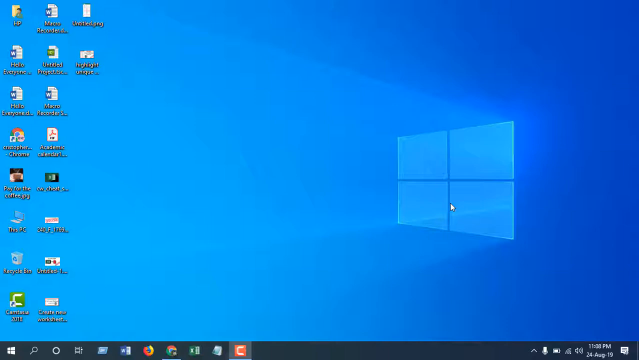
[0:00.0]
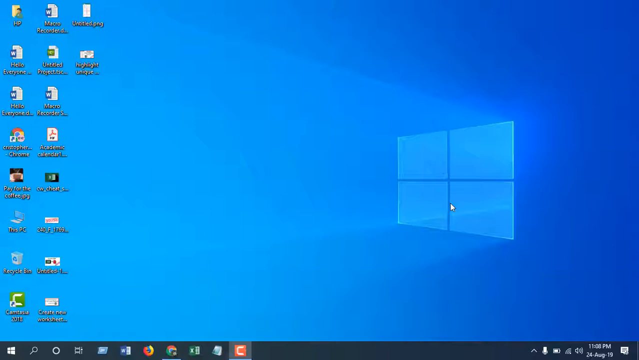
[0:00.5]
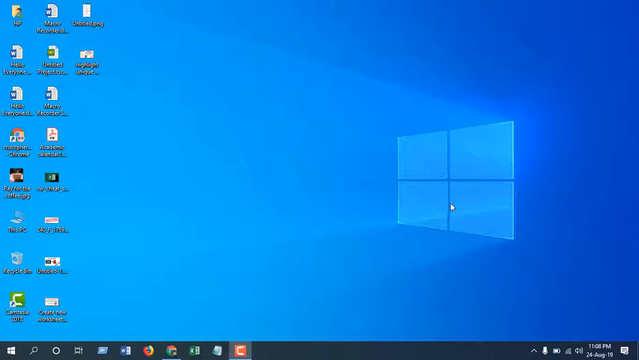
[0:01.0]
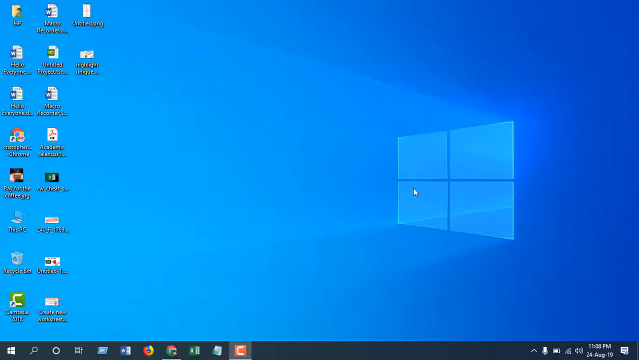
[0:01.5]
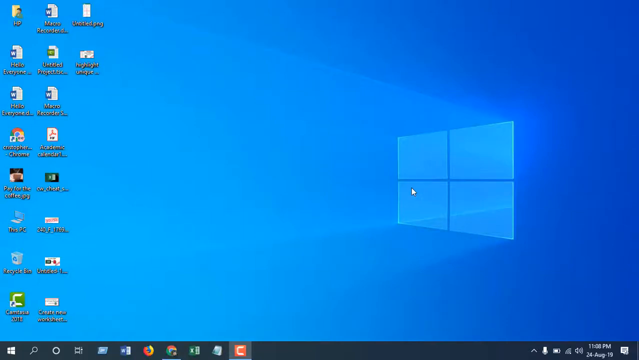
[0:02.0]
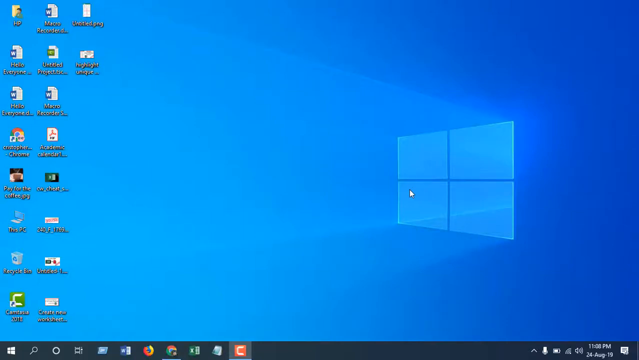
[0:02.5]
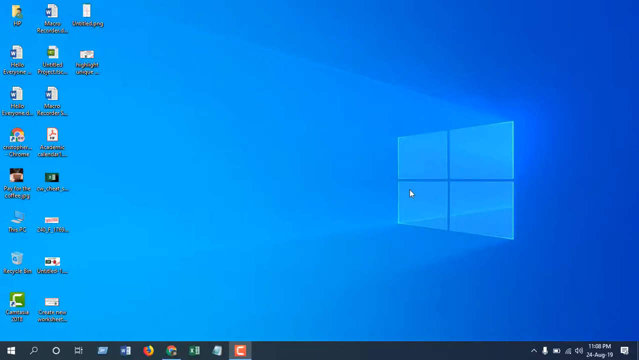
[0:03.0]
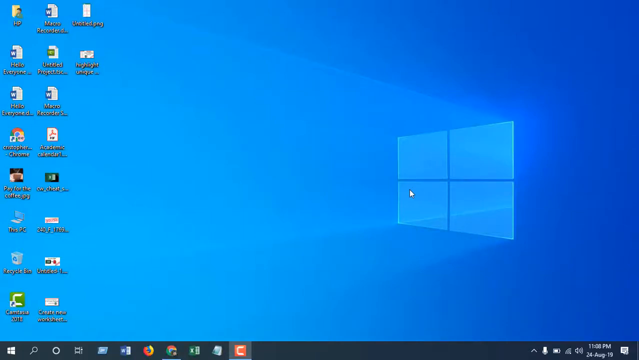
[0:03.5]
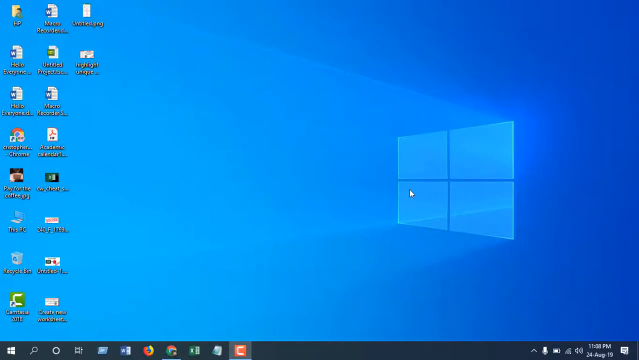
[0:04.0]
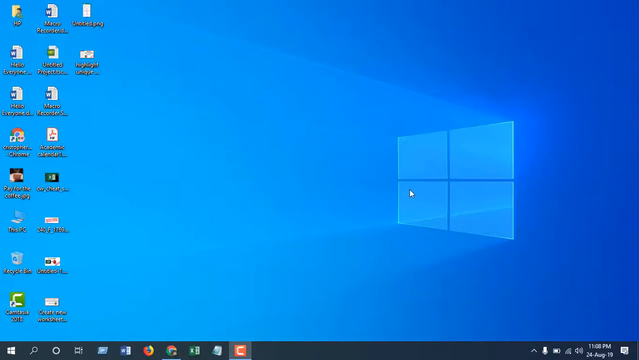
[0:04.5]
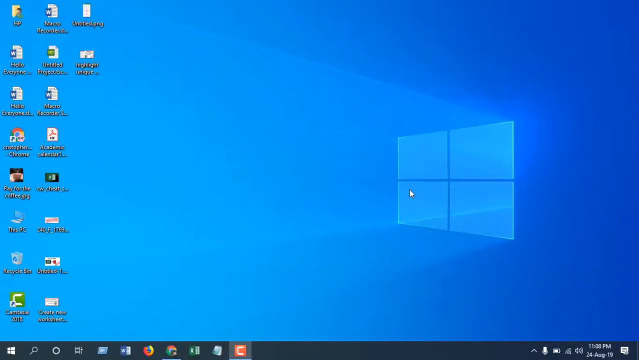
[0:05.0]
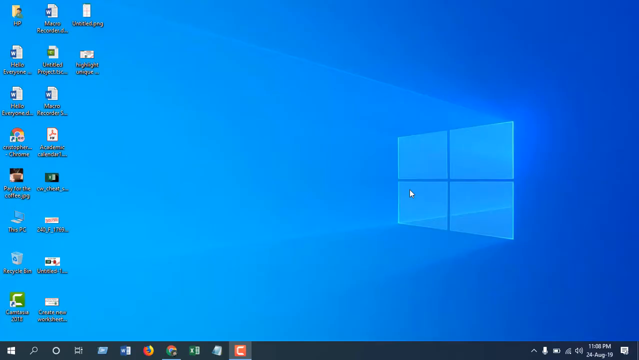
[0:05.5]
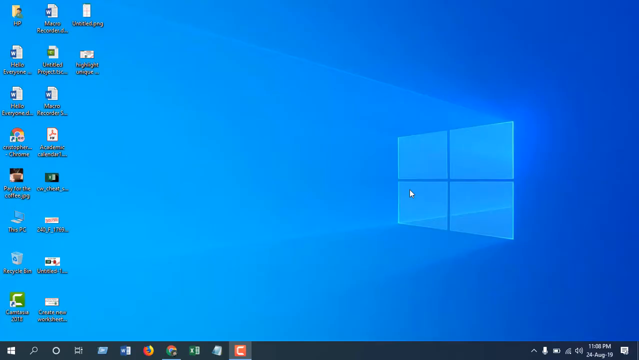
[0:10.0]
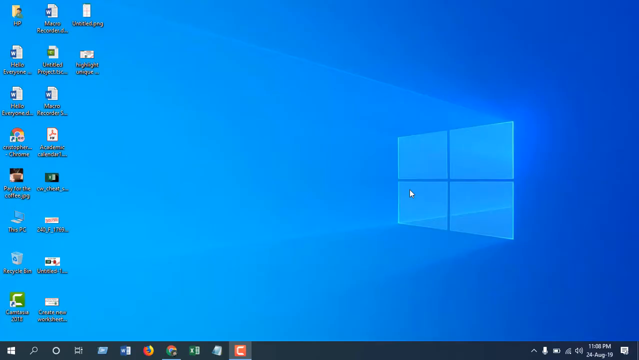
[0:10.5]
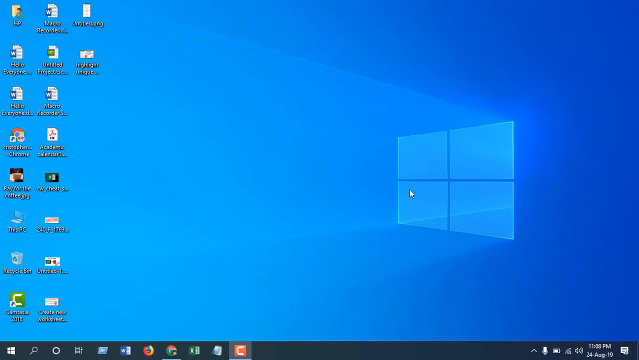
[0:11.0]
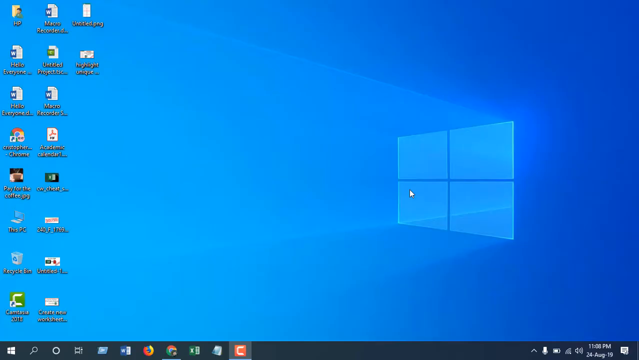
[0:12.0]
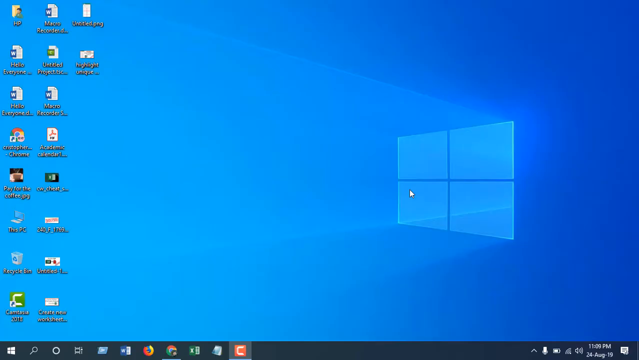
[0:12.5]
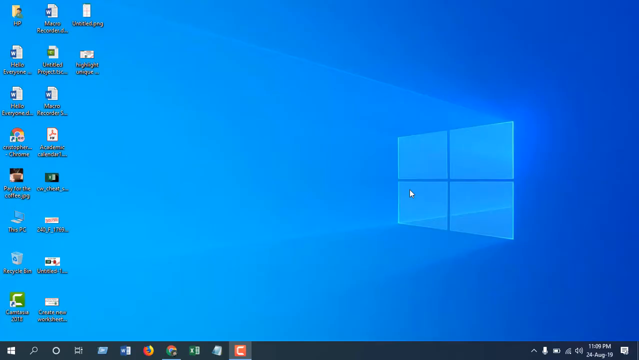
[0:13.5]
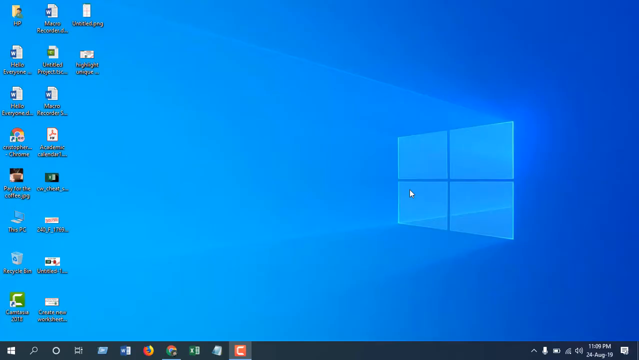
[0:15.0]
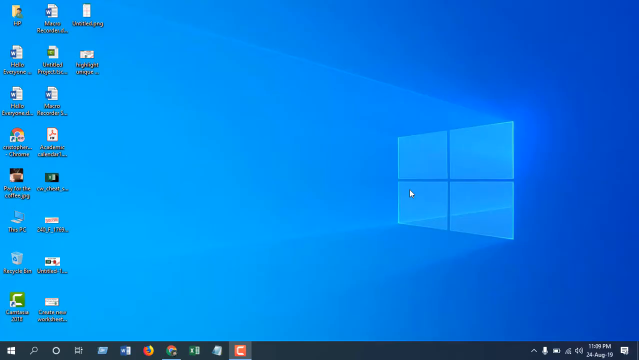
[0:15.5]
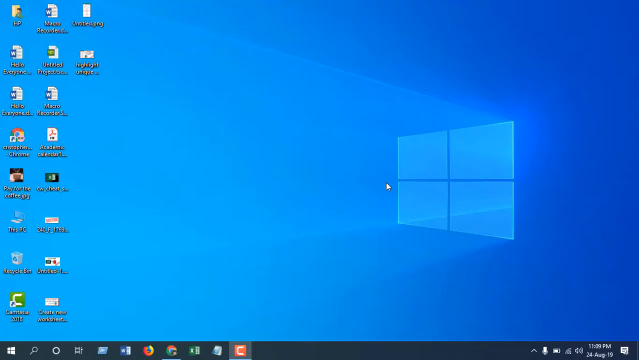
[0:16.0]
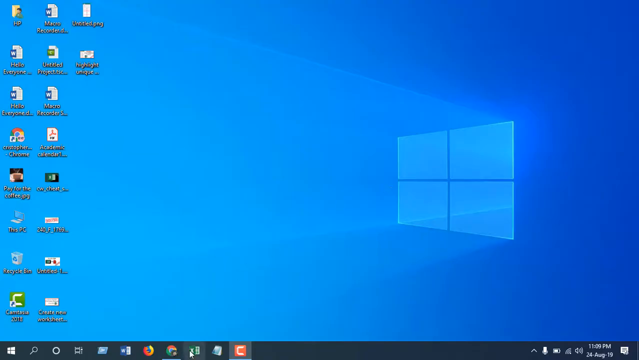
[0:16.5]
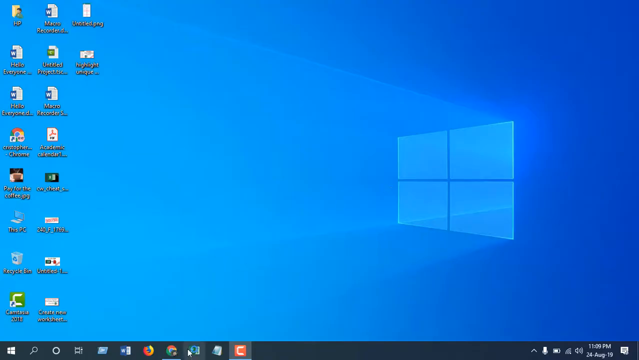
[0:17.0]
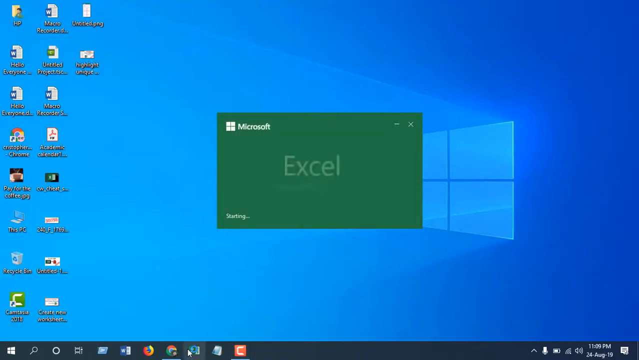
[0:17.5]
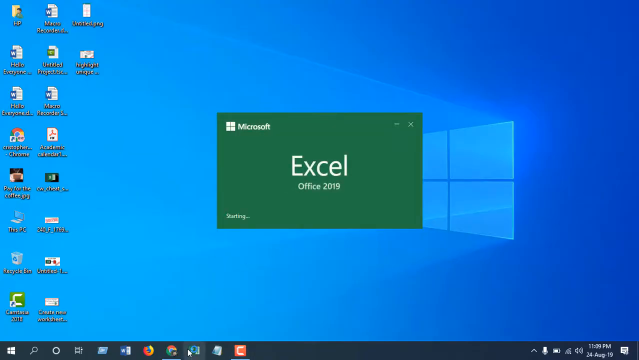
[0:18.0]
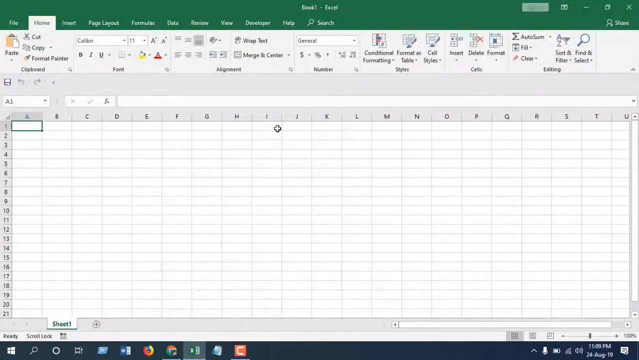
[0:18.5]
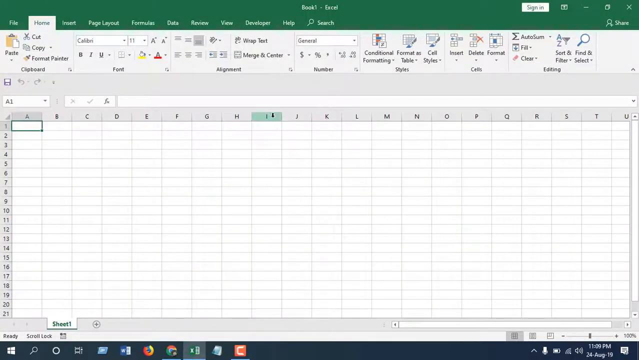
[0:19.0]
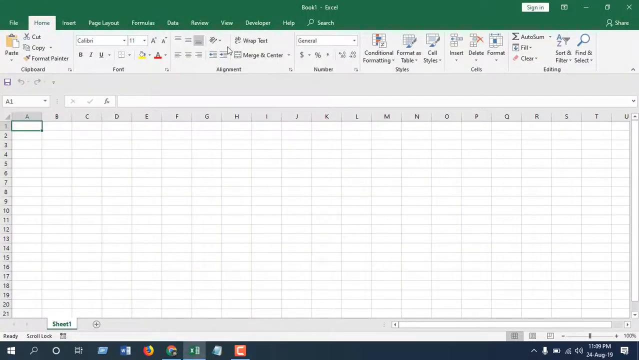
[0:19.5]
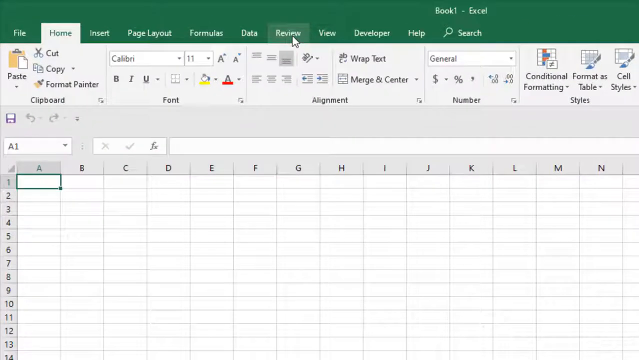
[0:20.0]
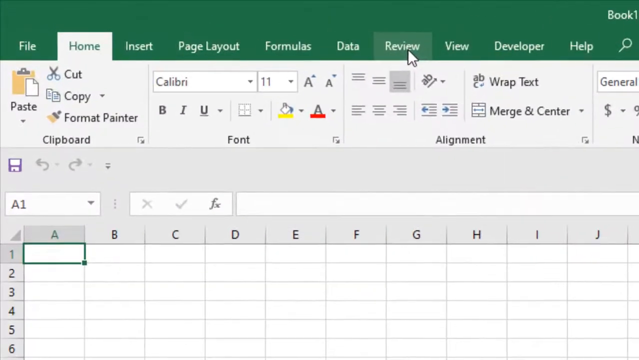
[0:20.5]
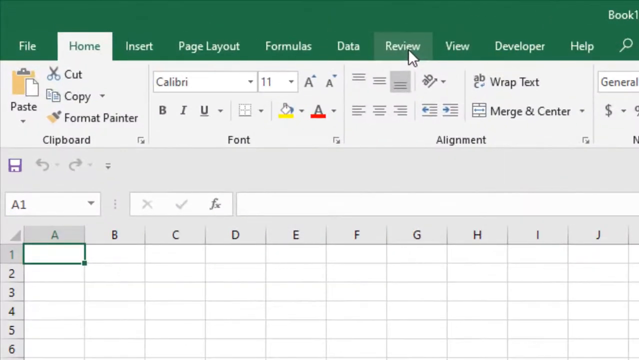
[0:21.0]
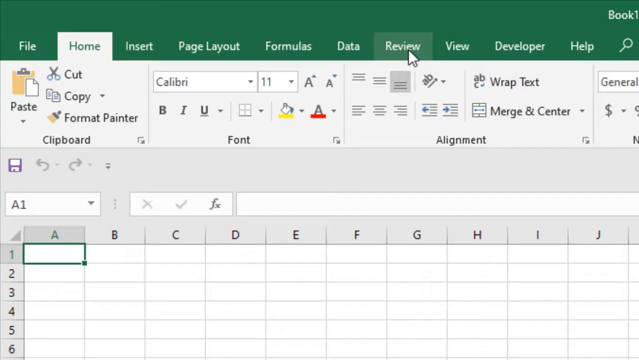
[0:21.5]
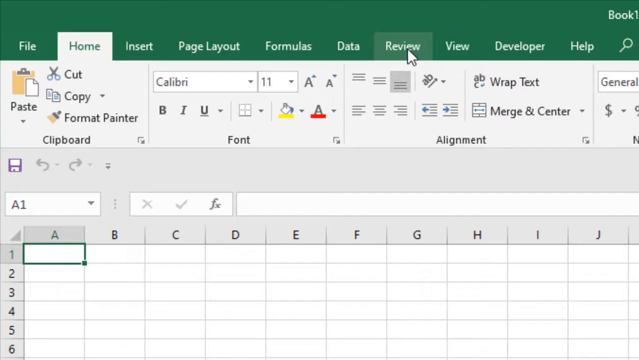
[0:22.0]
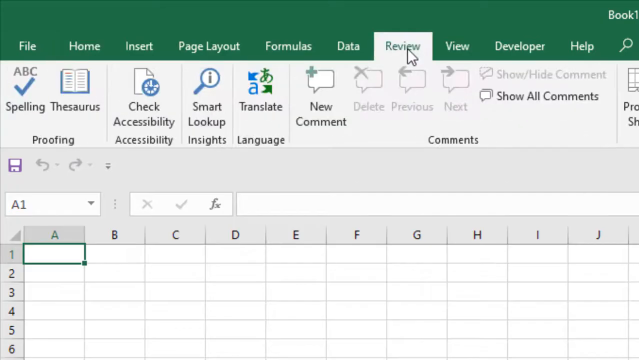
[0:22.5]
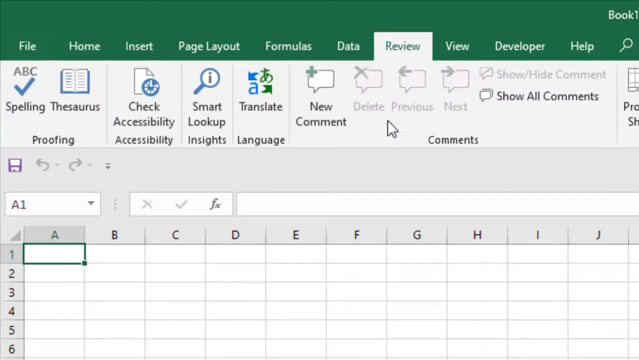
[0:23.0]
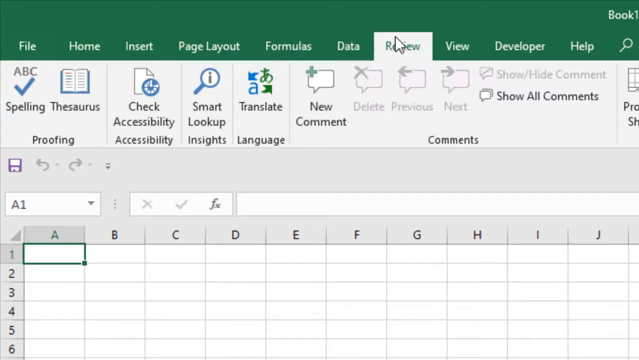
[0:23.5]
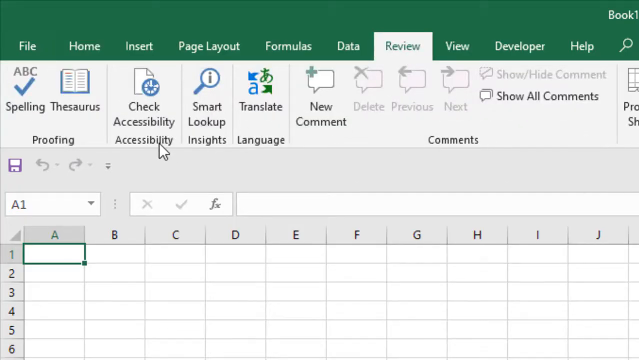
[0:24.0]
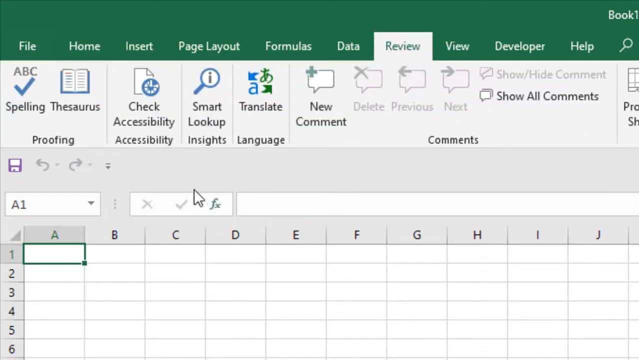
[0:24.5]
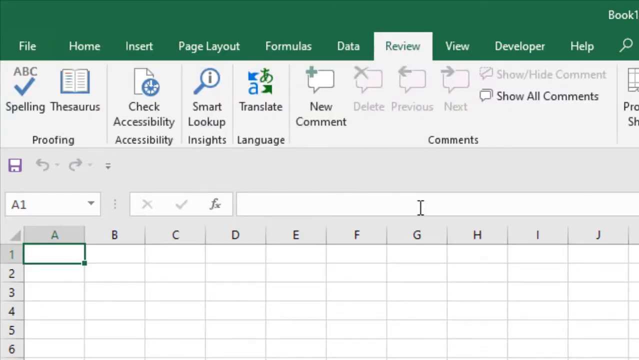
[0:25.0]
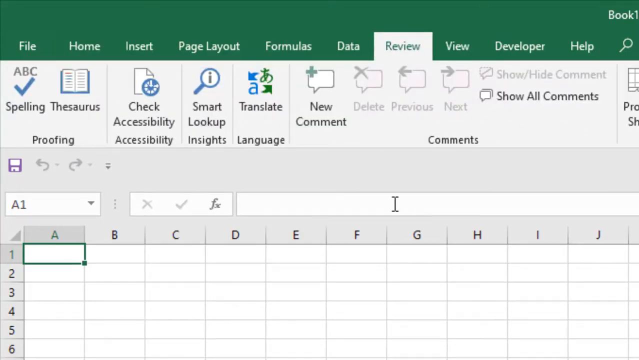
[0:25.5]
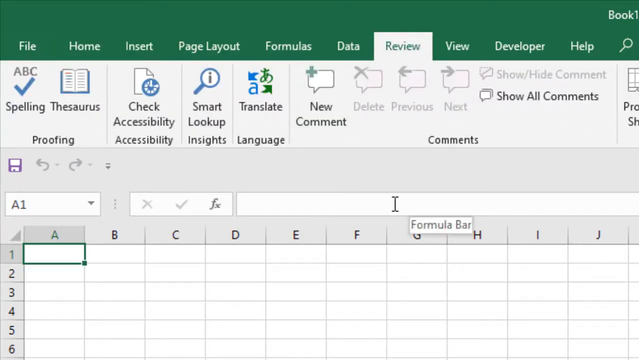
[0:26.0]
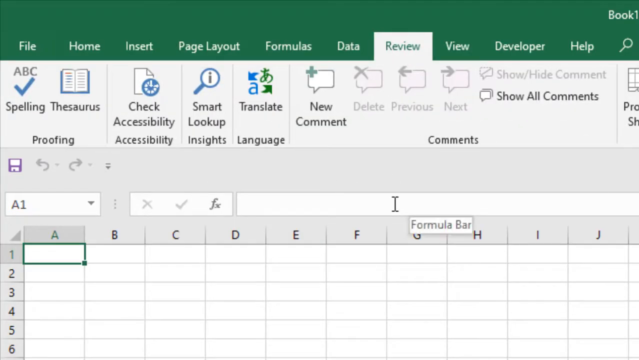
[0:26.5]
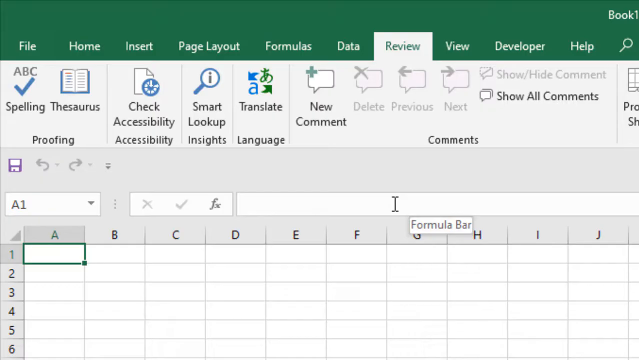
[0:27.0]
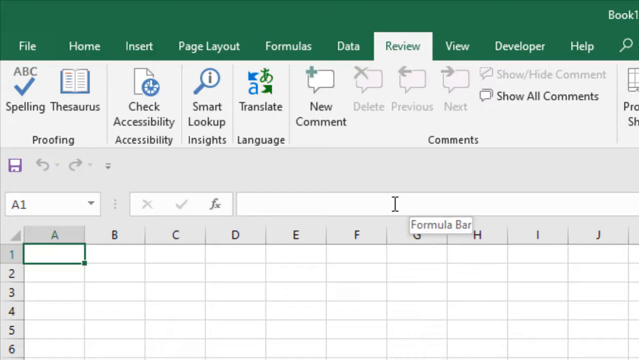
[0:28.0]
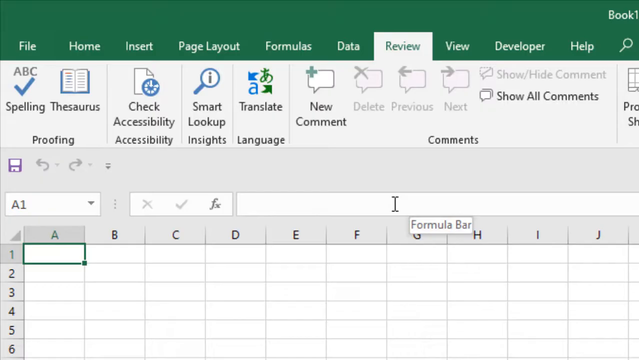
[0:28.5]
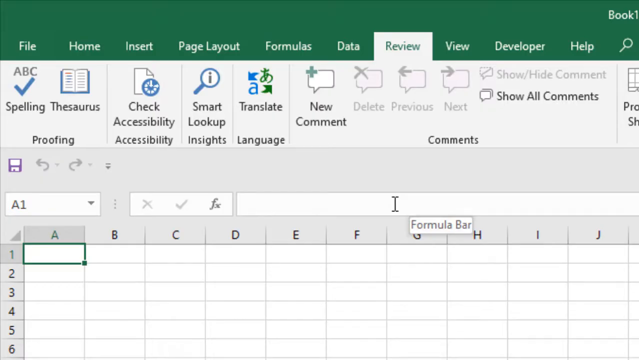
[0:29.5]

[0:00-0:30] A Windows desktop background shows icons such as HP, Chrome, Recycle Bin and This PC, along with some other files, including some Word files. The mouse moves slightly. A bar runs along the bottom of the screen with some icons and a time. The mouse moves and opens Microsoft Excel, and the camera zooms in to the tab section, which lists File, Home, Insert, Page Layout, Formulas, Data, Review, View, Developer and Help. The user hovers over Review and clicks it, bringing up options such as ABC Spelling, Thesaurus, Proofing, Check Accessibility, Smart Lookup, Insights, Translate, Language, New Comment and Show All Comments. The mouse moves around in a circle and then hovers over the formula bar. A large number of empty cells and a save button are visible.